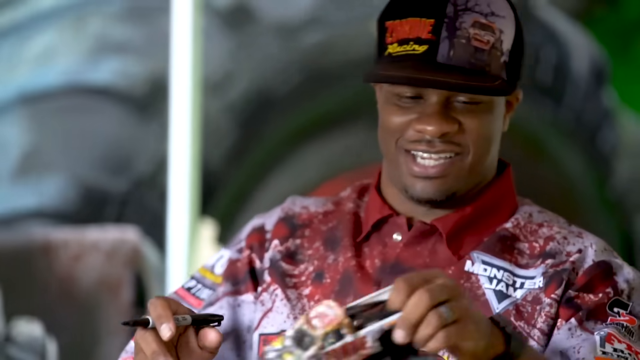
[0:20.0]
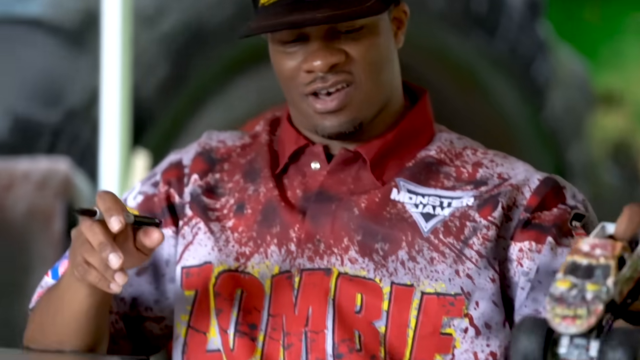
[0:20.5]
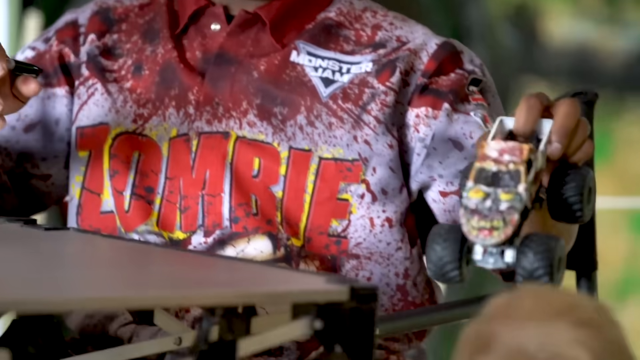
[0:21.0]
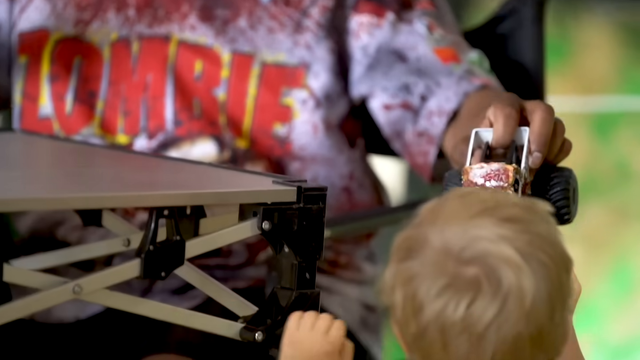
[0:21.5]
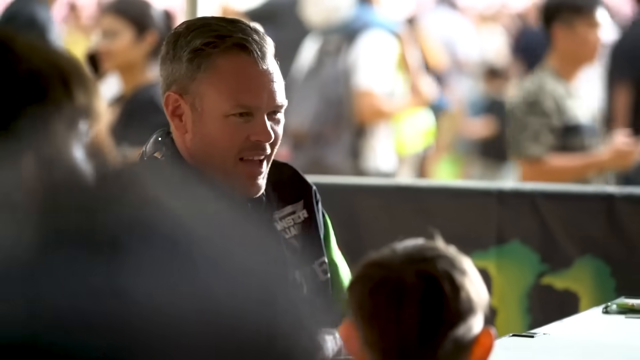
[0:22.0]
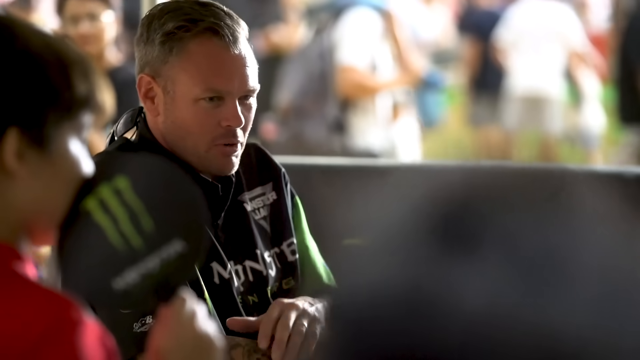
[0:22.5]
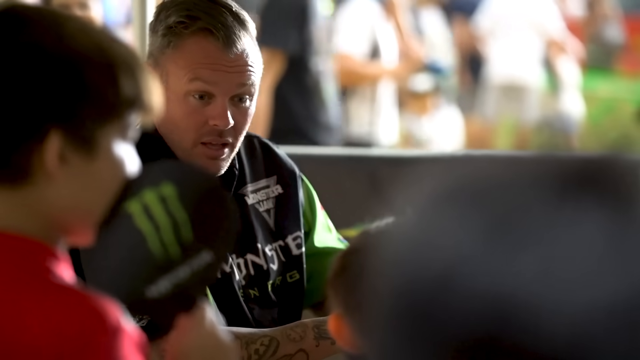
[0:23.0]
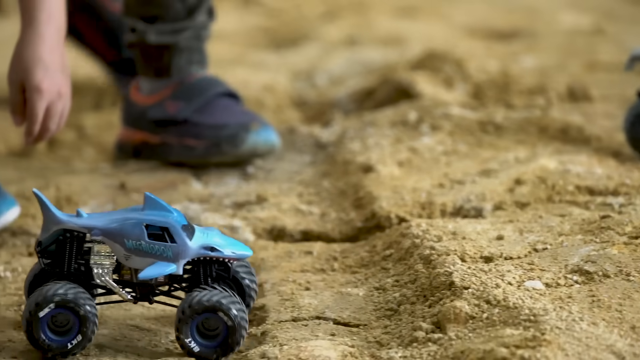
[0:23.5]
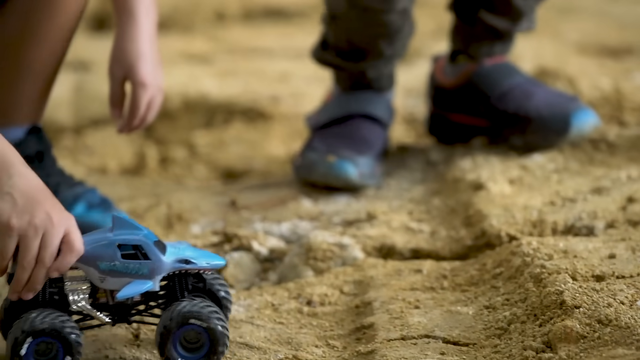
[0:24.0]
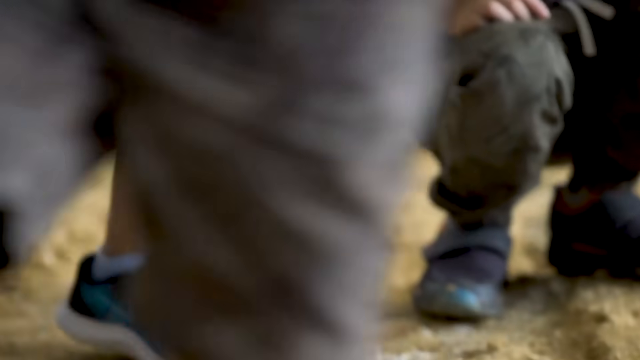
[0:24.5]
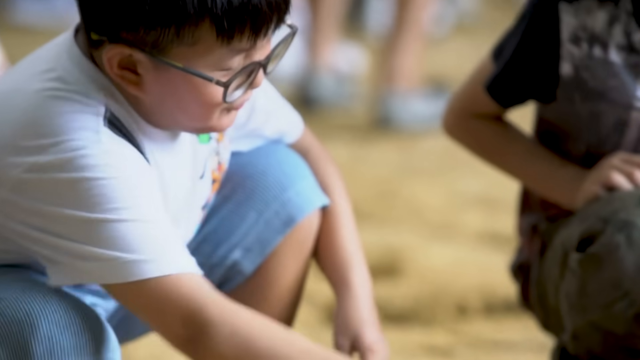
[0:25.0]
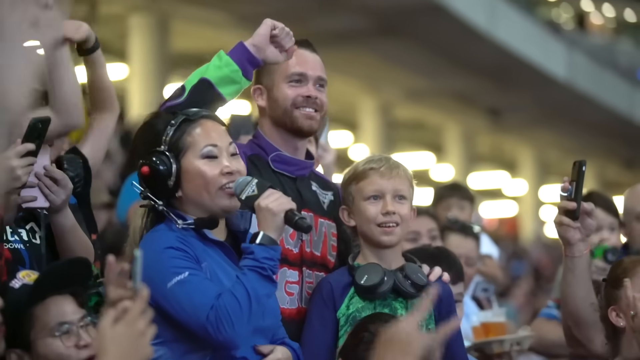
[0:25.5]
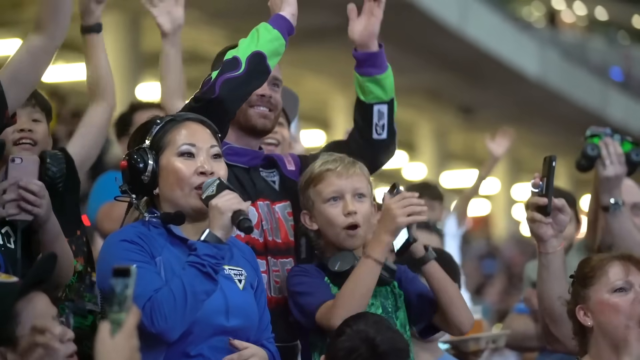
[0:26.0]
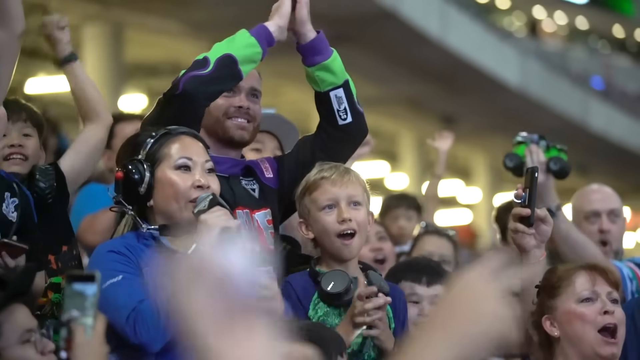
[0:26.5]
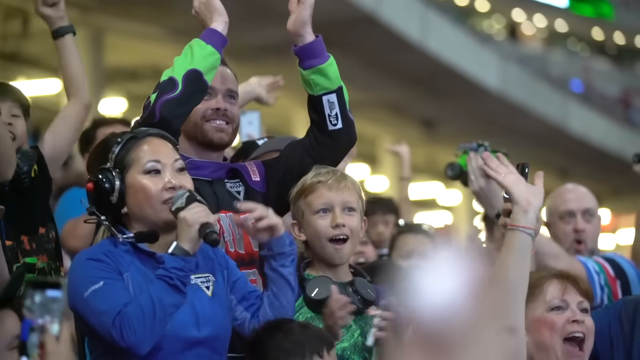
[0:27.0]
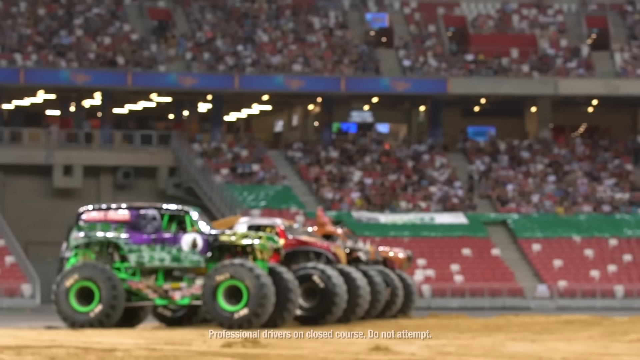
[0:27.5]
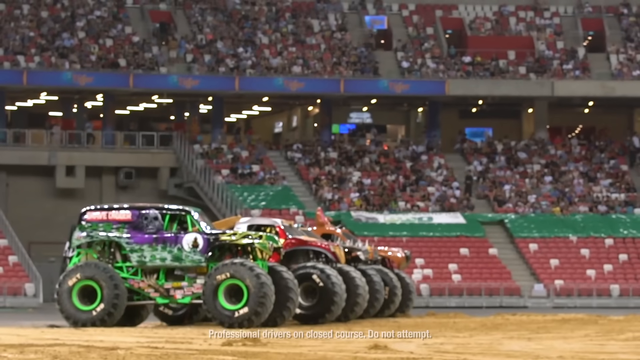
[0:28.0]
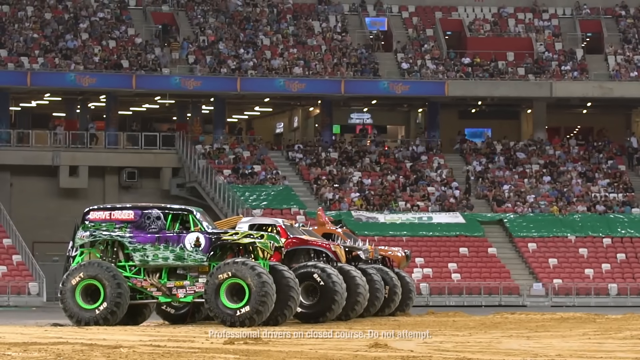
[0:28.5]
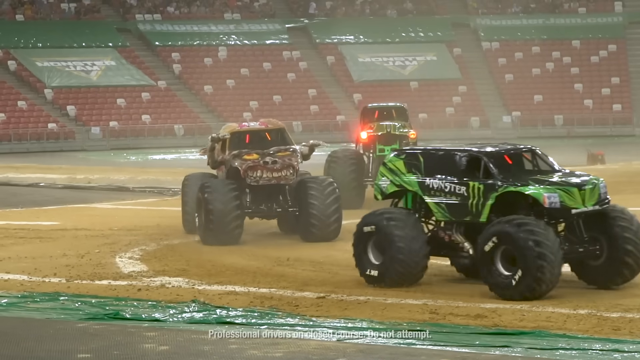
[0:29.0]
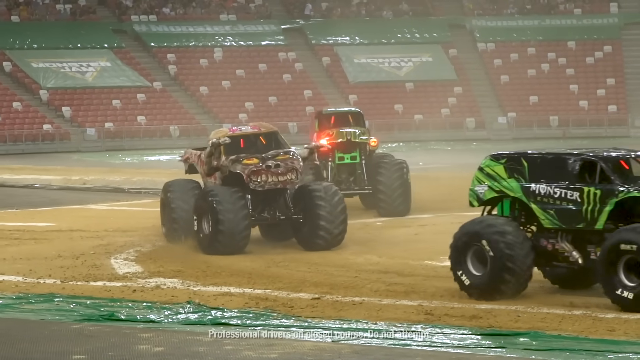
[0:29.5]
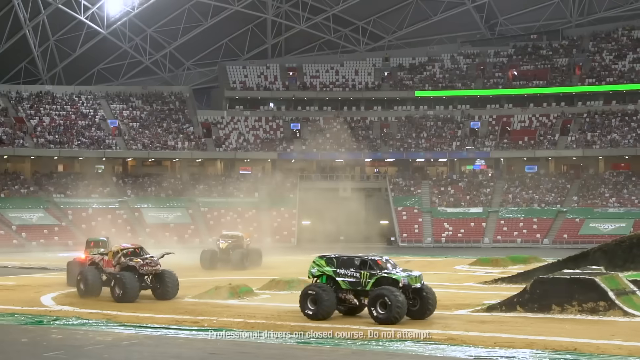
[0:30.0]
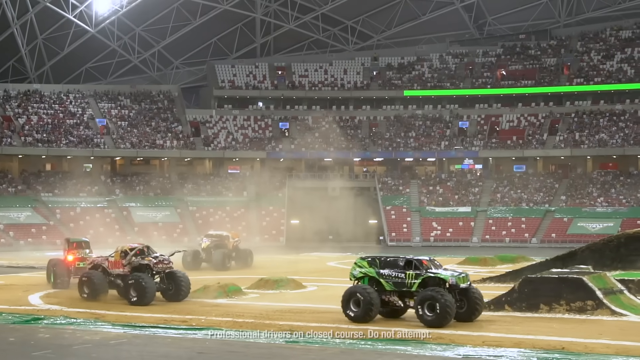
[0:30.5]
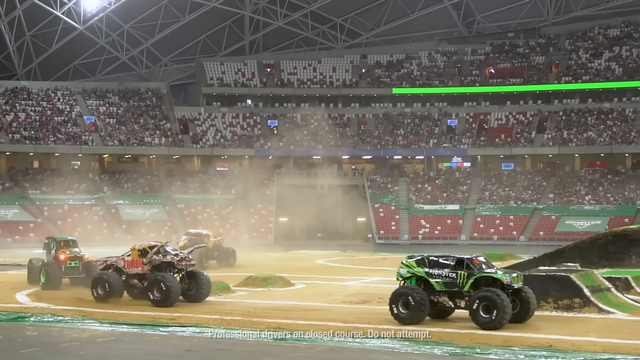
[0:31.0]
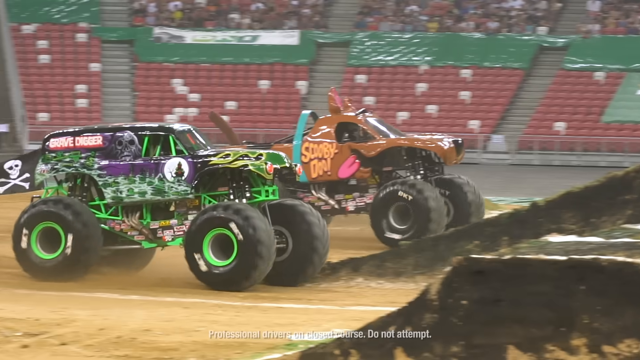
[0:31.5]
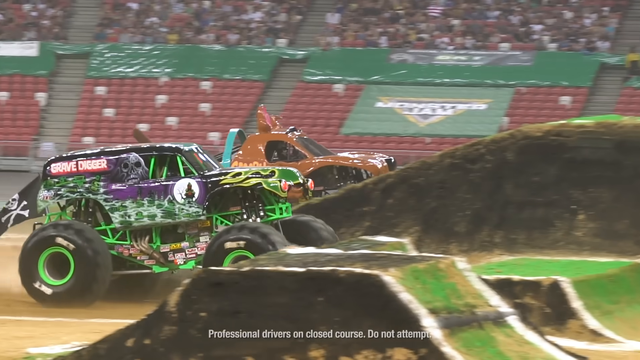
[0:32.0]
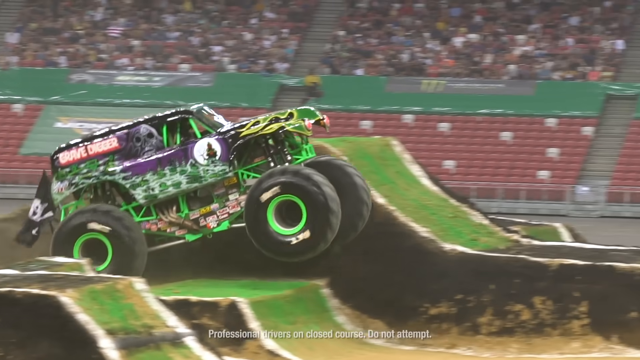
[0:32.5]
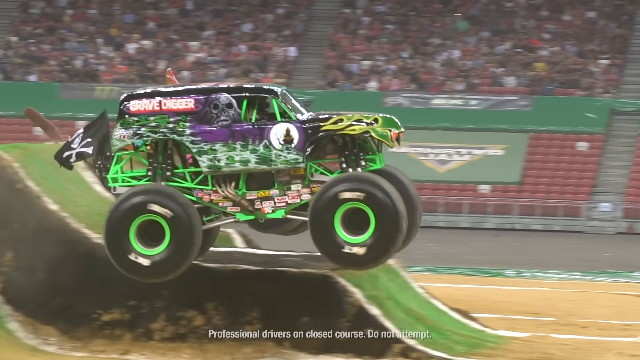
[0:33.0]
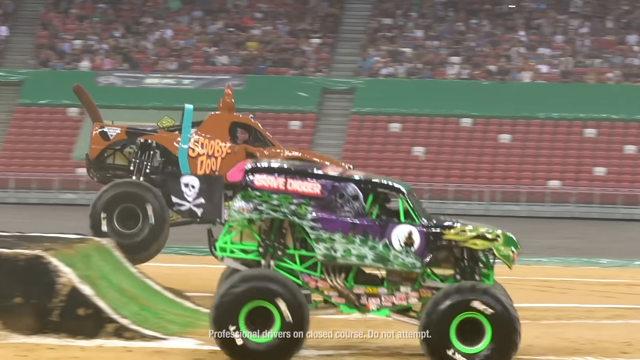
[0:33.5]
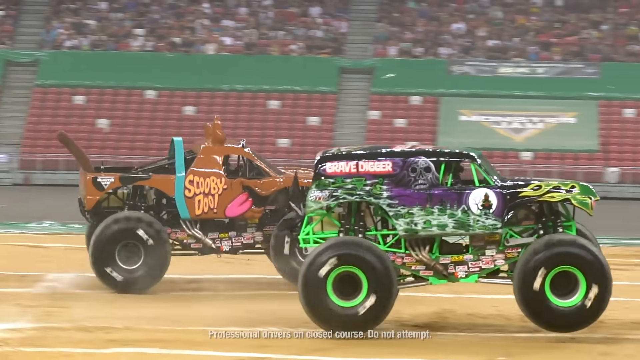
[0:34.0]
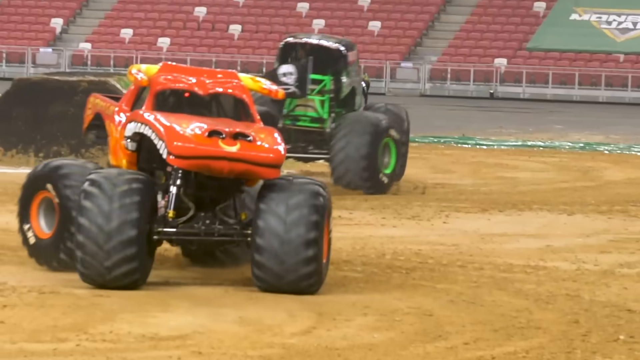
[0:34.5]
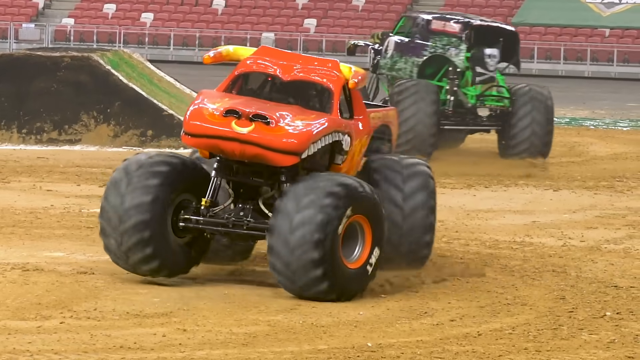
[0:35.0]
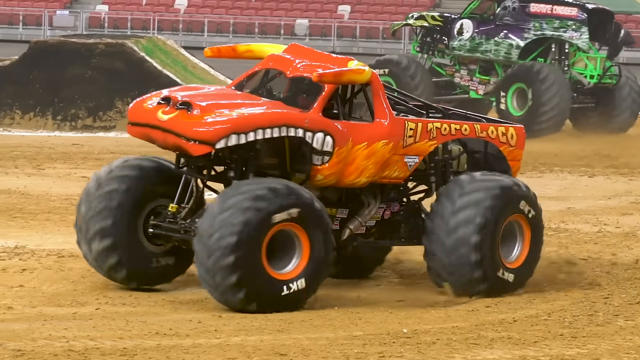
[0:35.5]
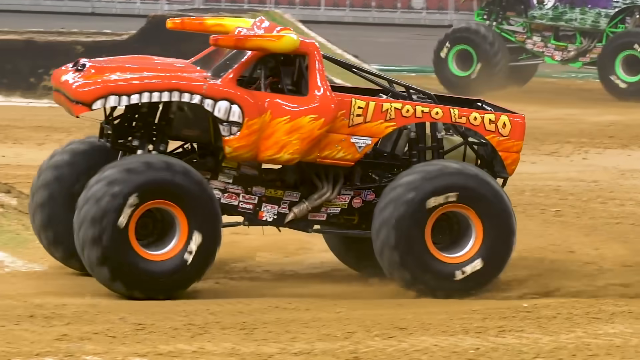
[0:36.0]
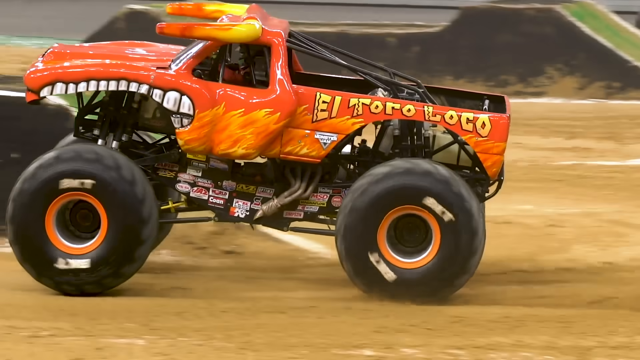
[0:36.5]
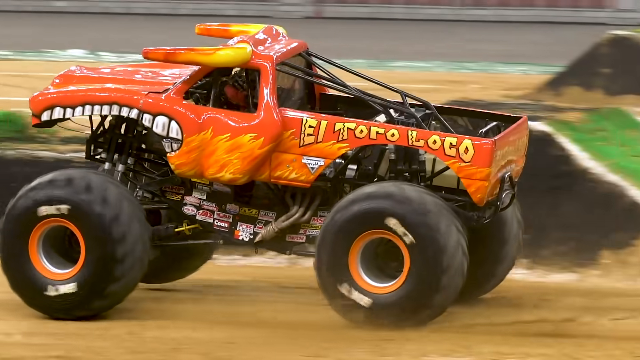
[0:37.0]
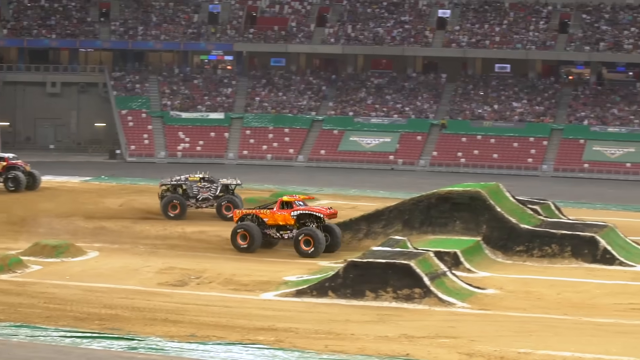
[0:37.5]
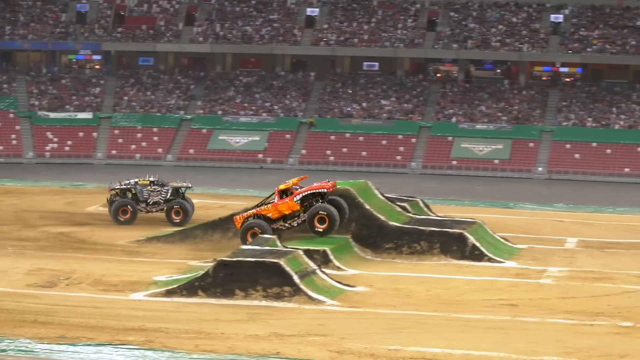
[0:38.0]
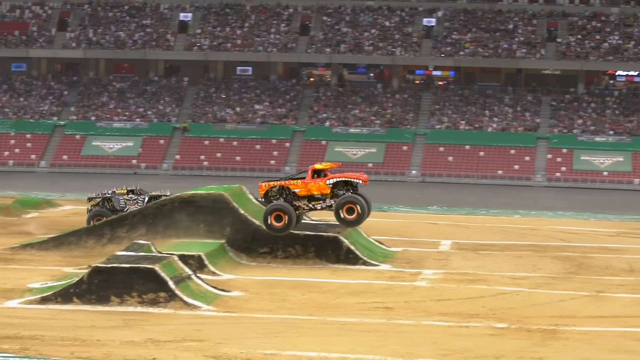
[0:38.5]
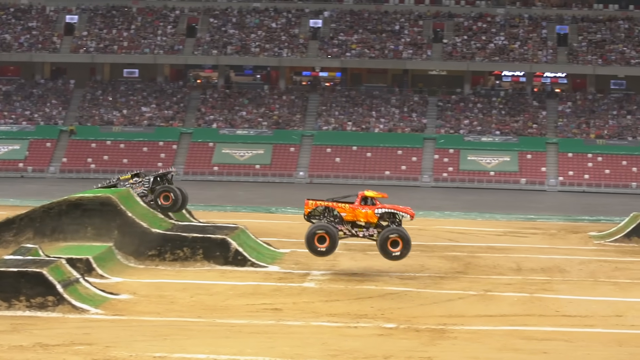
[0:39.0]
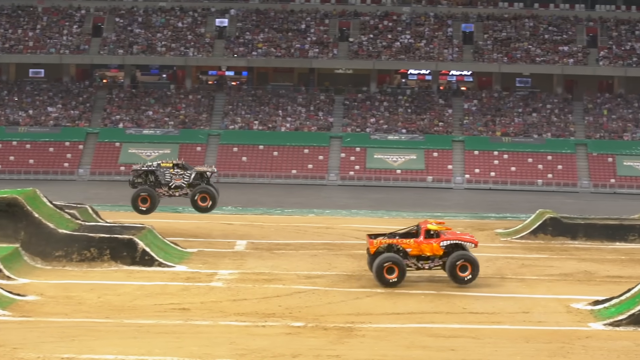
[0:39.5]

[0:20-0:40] On a field that looks like an infield, four cars of different colours seem to be in a game, driving onto something like a mountain and jumping in different ways, like a competition. A crowd cheers them on. A man gives a baby some toy cars similar to the ones on the ground, and the kid seems to enjoy playing with them. The cars seem automated, with no people visible in them. Around six people can be counted, but there is a large crowd; the scene is bright and the field is huge, with the crowd cheering and watching.